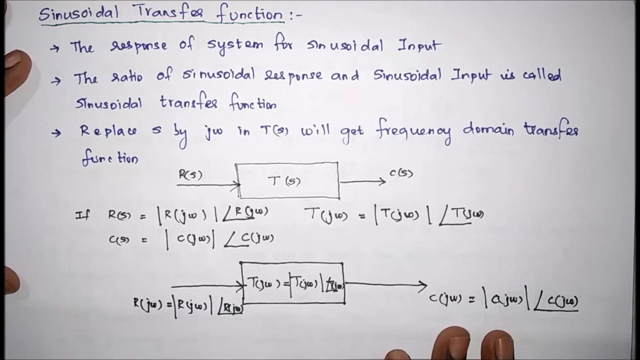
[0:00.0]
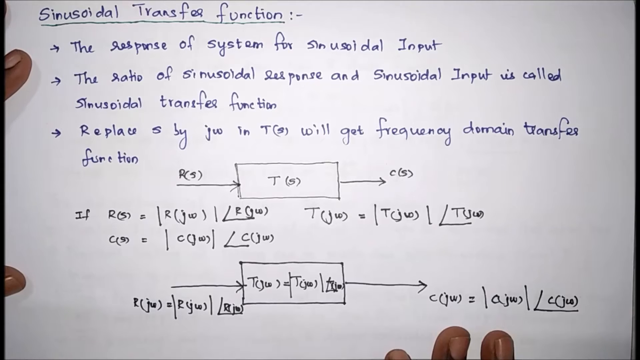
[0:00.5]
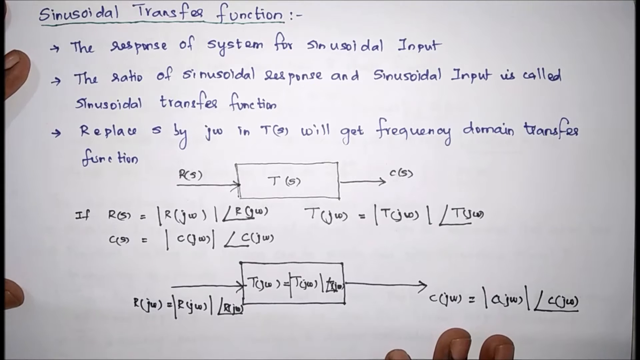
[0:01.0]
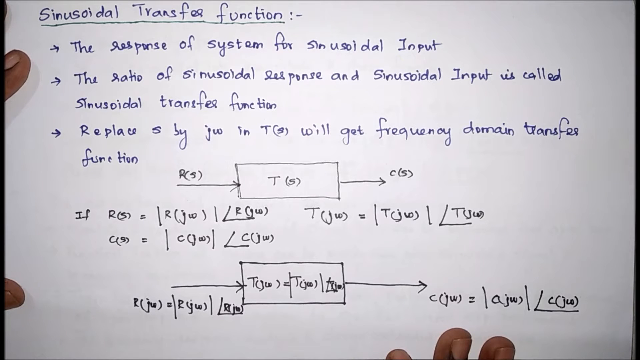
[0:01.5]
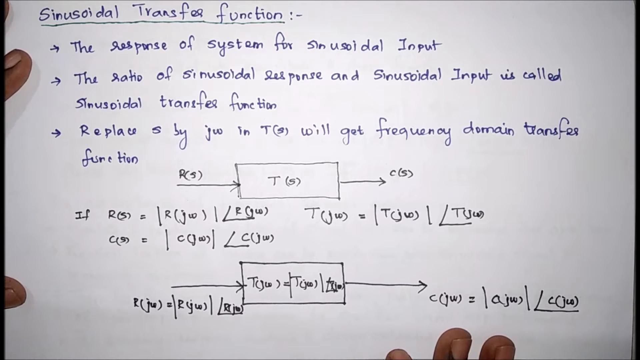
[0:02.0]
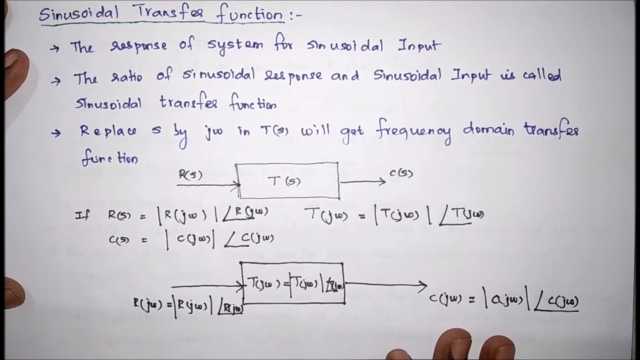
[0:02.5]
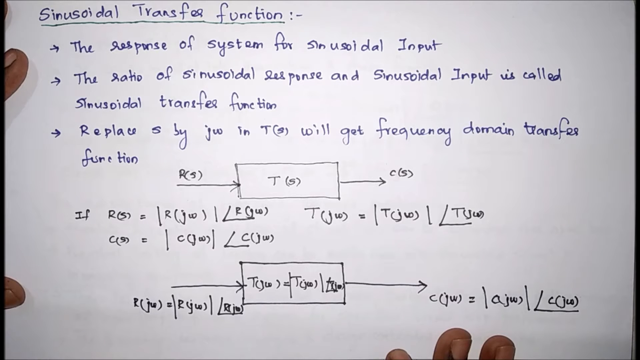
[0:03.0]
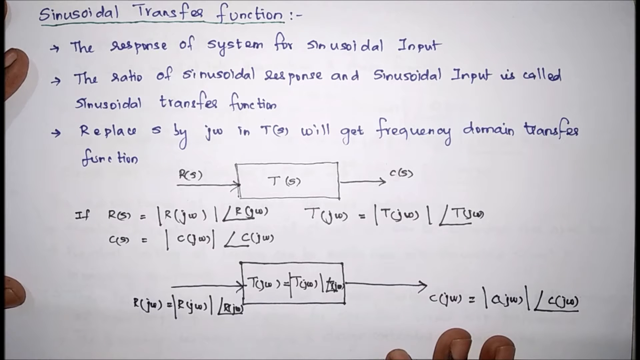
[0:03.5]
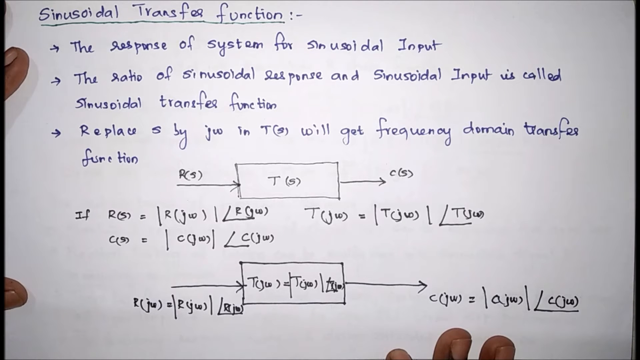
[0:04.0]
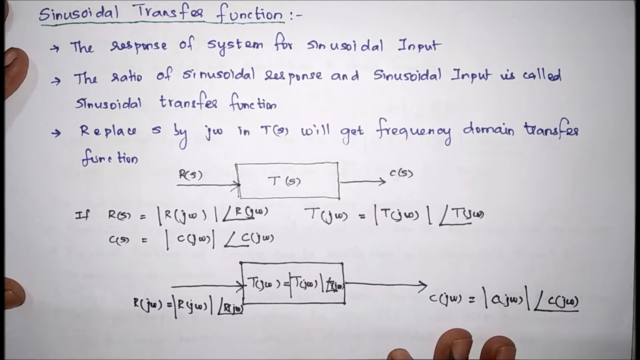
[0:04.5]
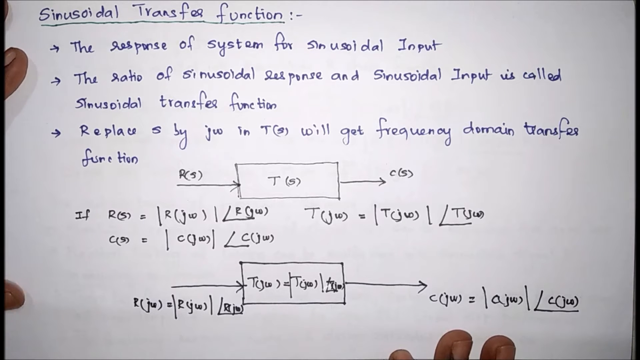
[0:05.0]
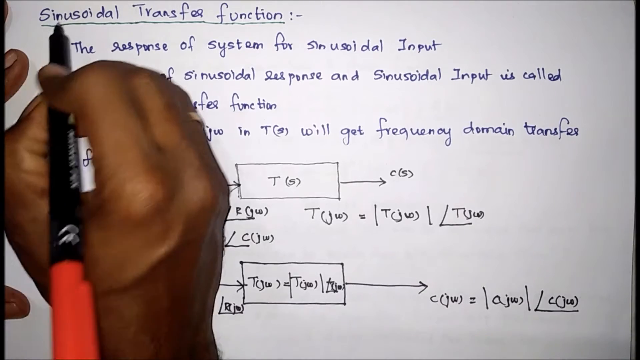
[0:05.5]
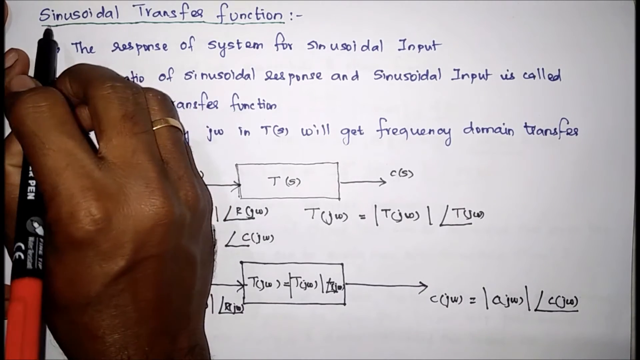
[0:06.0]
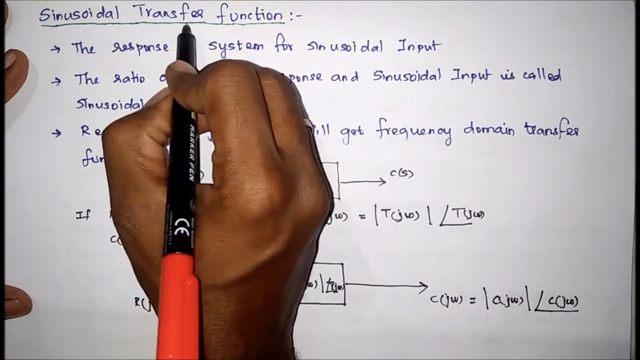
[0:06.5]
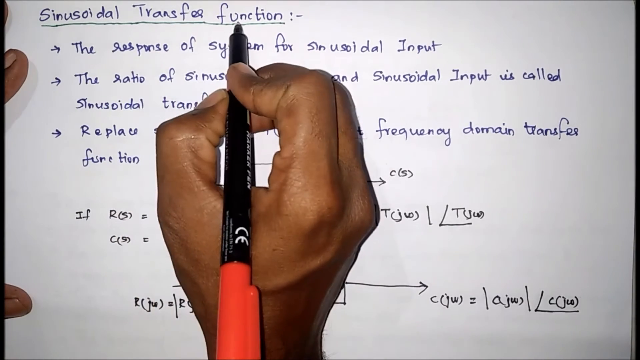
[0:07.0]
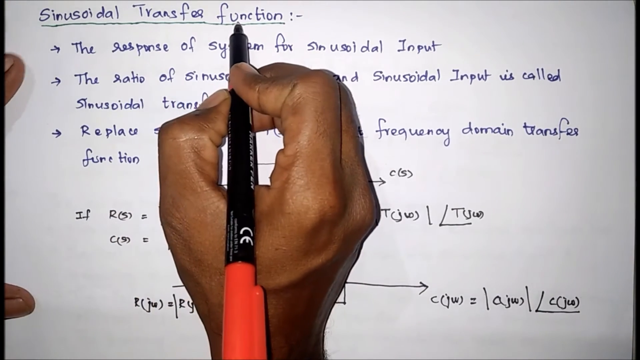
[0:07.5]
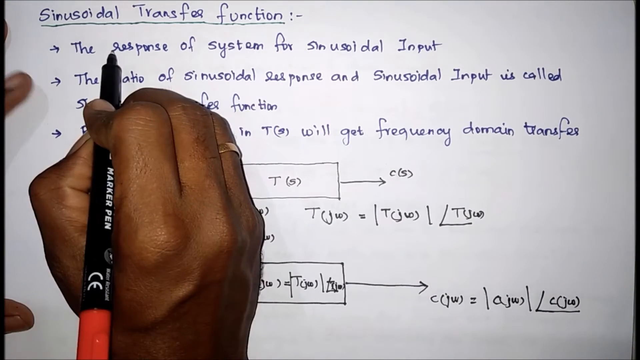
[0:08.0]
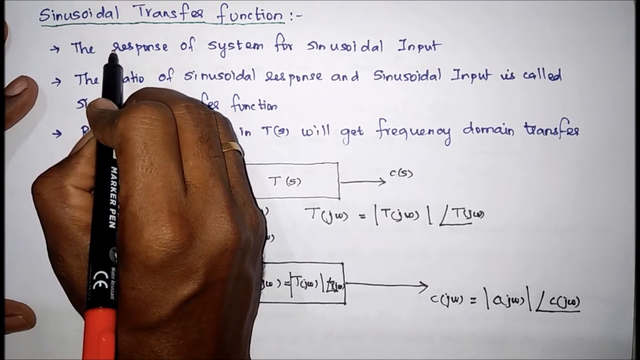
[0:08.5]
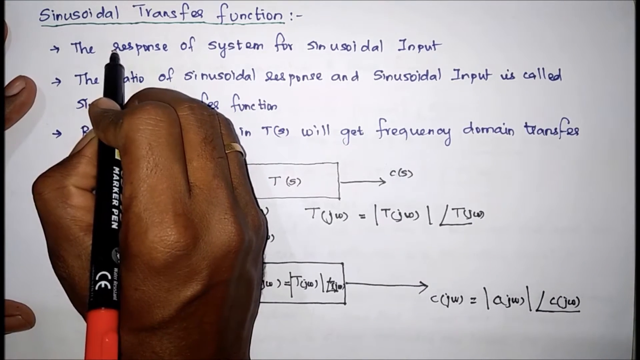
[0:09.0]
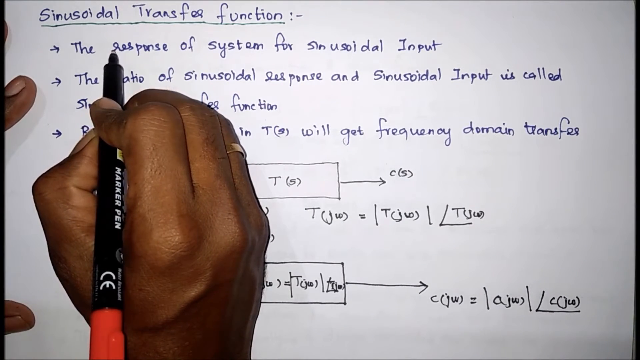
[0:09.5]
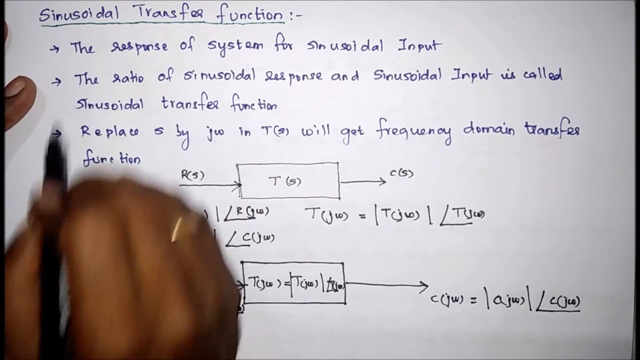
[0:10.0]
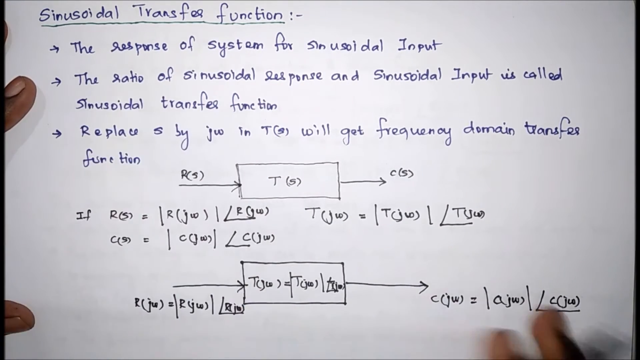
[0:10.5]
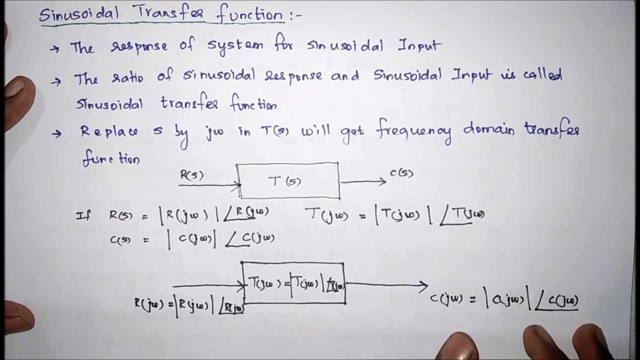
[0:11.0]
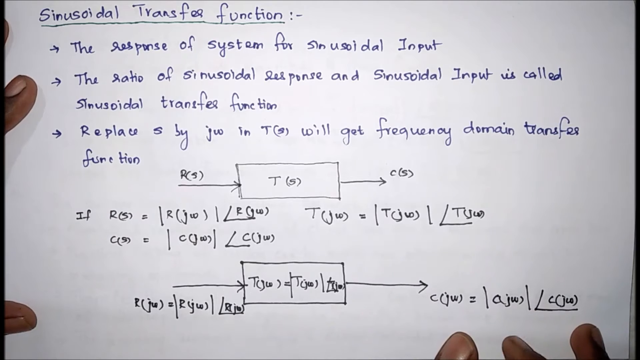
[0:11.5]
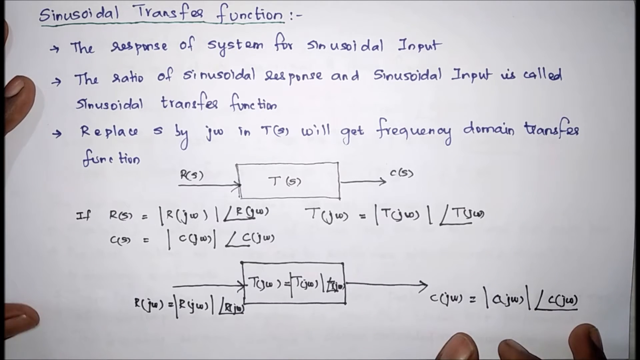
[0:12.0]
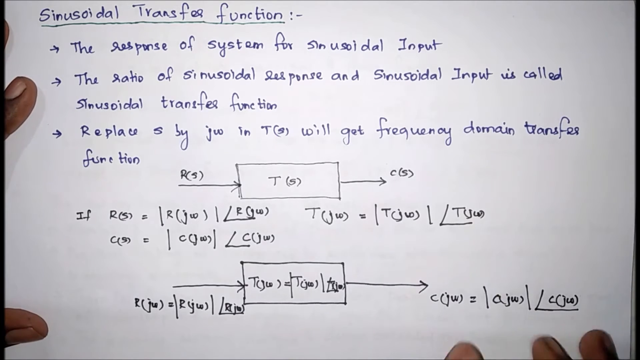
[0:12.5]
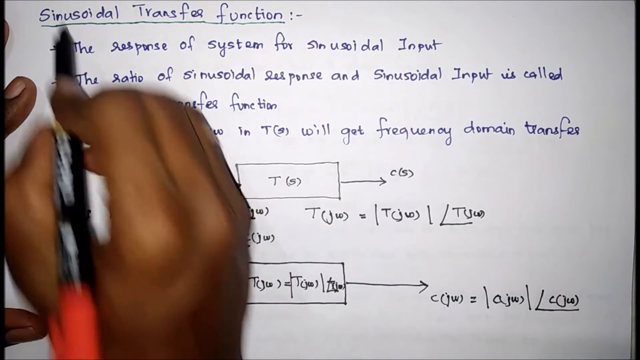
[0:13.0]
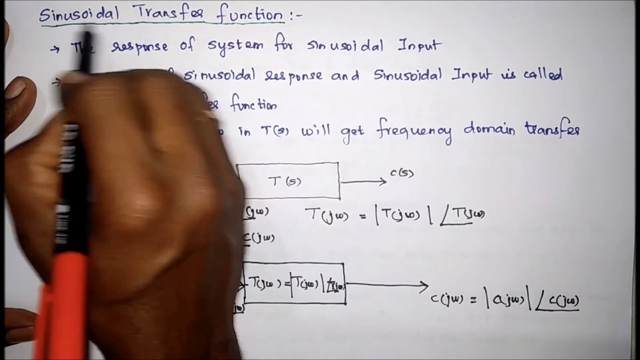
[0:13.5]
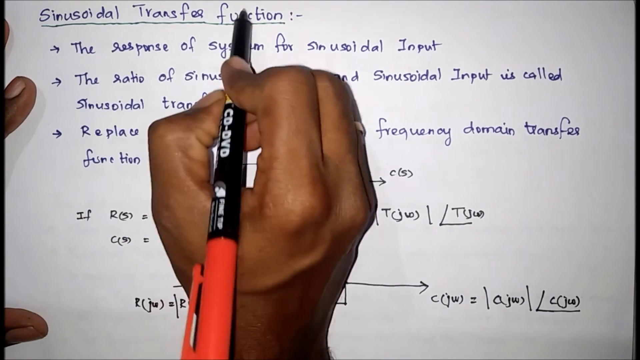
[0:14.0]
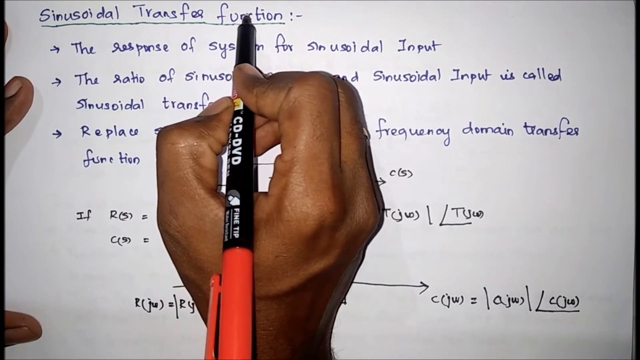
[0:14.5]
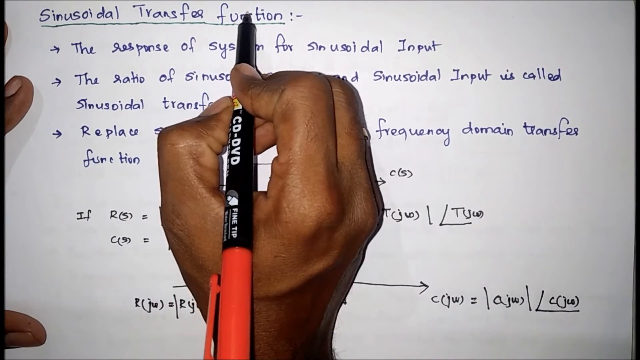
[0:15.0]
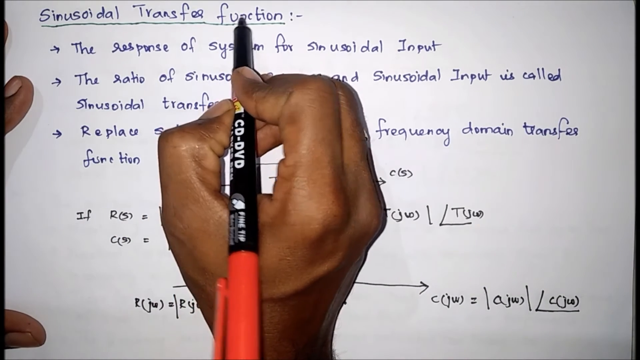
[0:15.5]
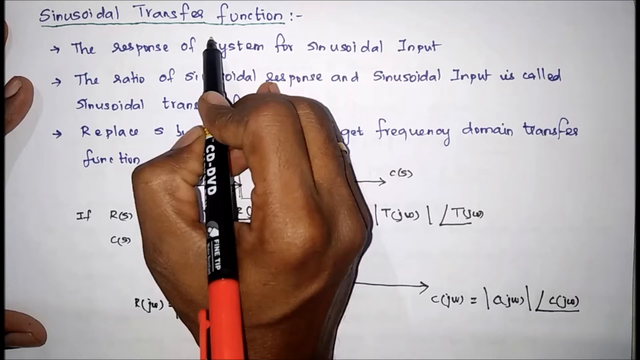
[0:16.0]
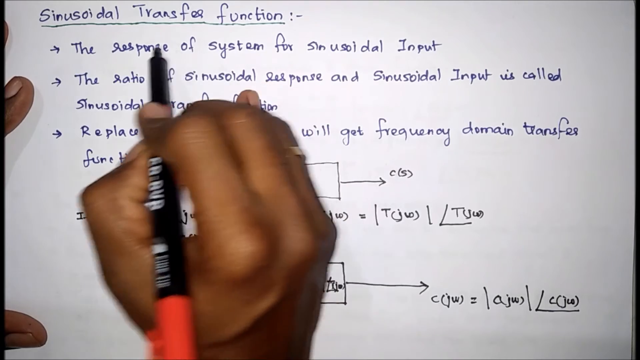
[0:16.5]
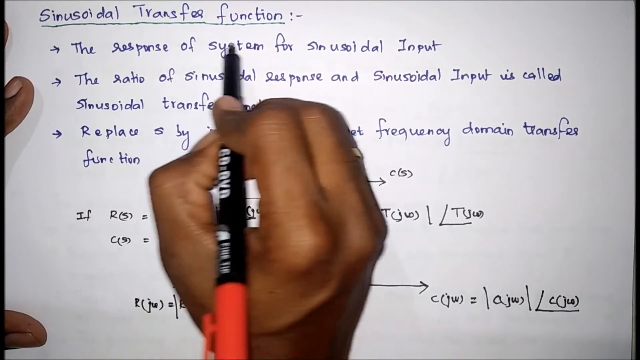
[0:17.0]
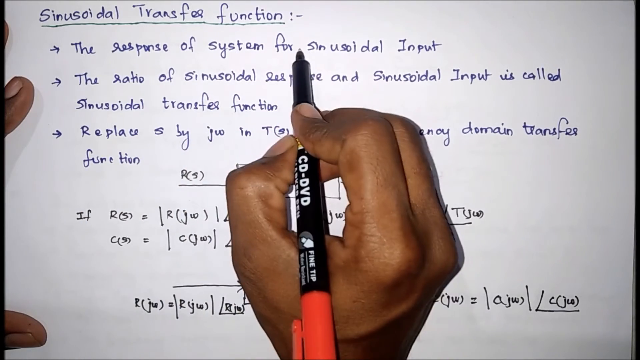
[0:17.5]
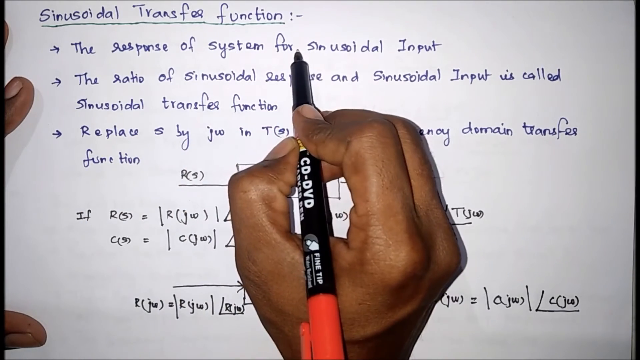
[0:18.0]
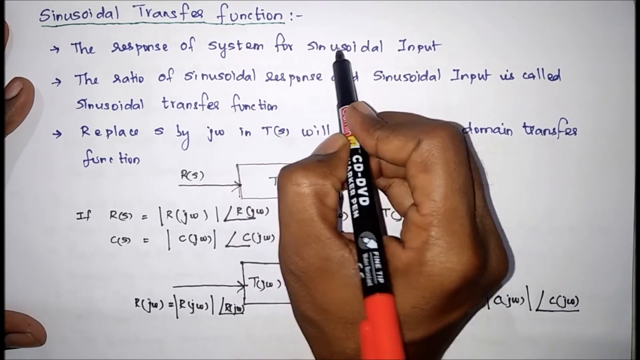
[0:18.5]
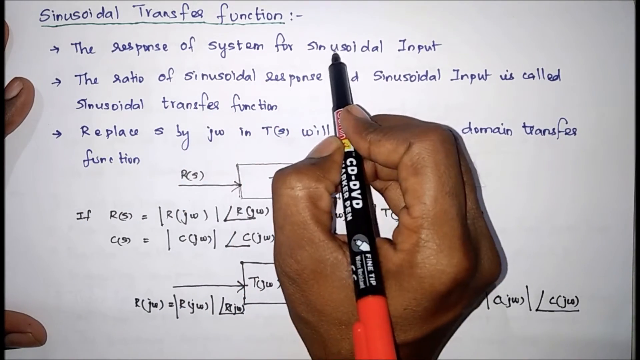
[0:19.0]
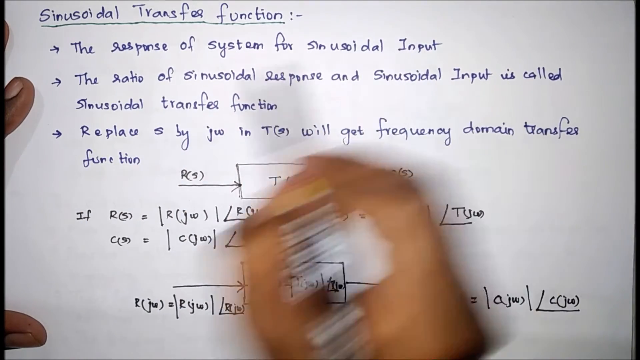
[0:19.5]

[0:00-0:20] Handwritten text in blue and black appears on a white background. It is a note titled "Sinusoidal Transfer Function." An individual's hand holds a pen, pointing at the title on the page and then moving the pen around some of the text, particularly the first line. The individual is black and appears to be wearing a ring on one of the fingers of his right hand; he holds the pen in his right hand. The pen bears some text and branding, including the text "Marker Pen" and the CE logo. Part of the note reads "The response of system for sinusoidal input," and the second item in the bulleted list says "The ratio of sinusoidal response and sinusoidal input is called sinusoidal transfer function."